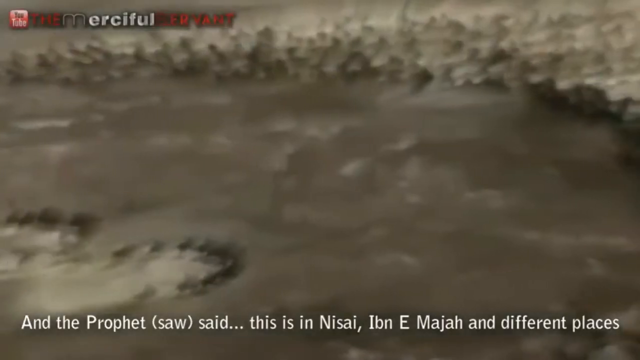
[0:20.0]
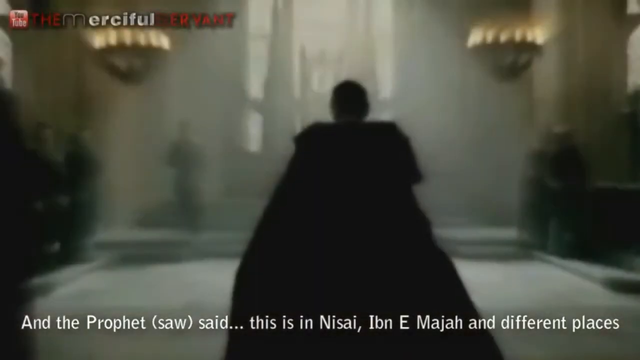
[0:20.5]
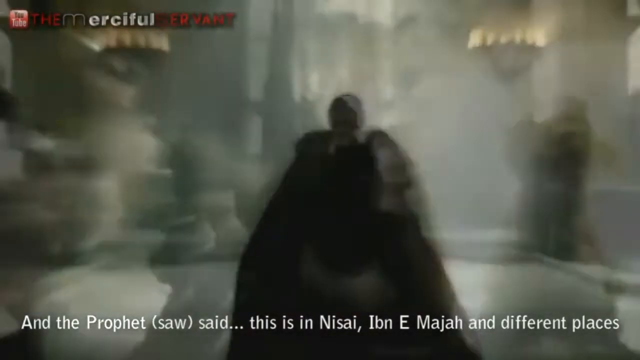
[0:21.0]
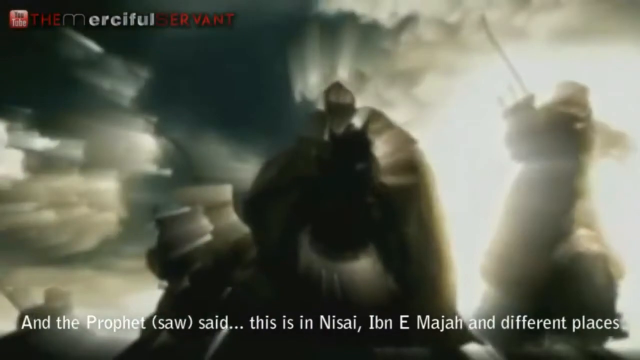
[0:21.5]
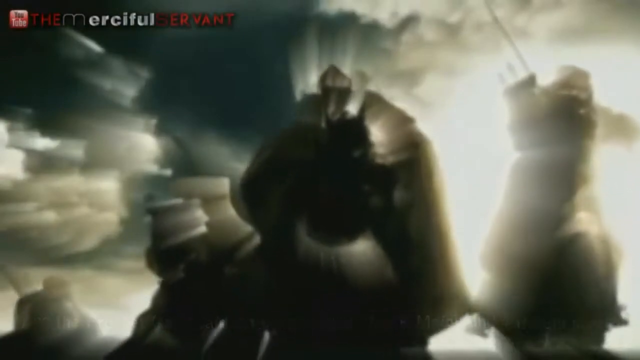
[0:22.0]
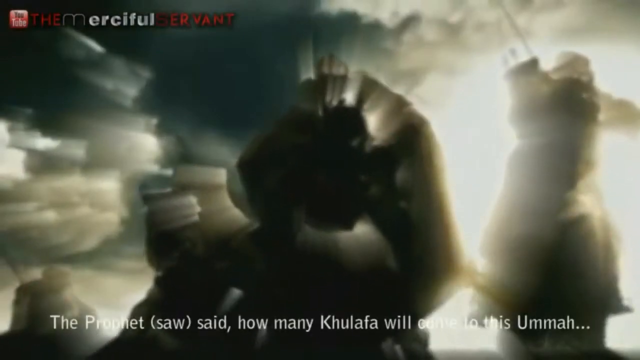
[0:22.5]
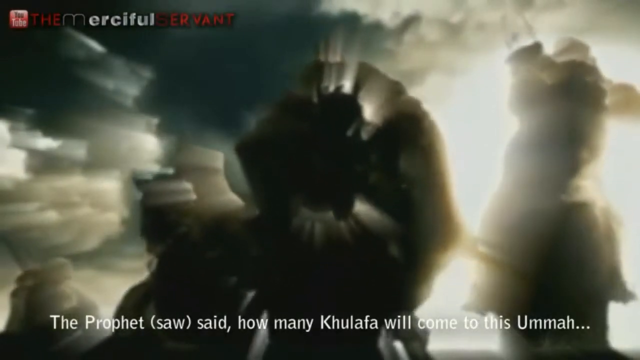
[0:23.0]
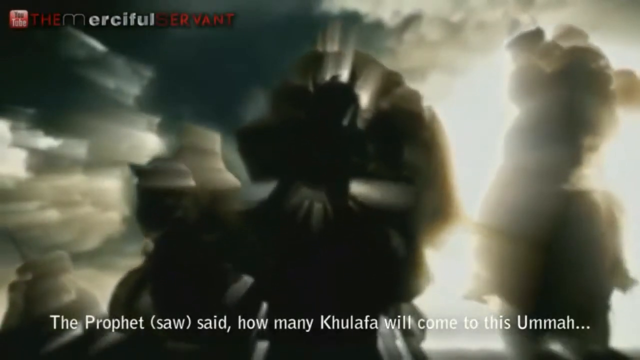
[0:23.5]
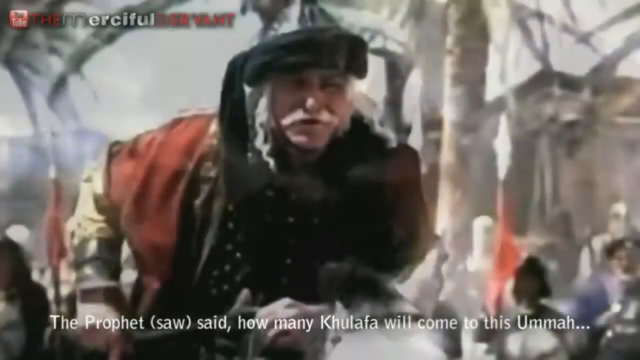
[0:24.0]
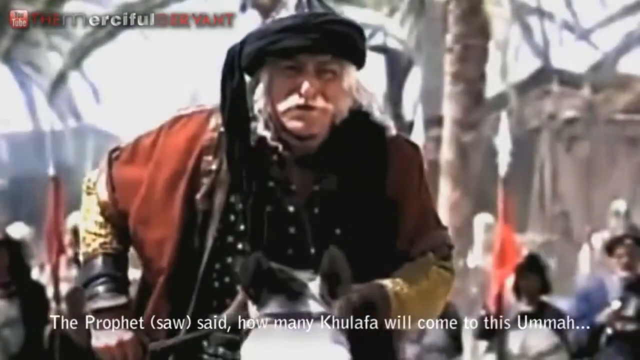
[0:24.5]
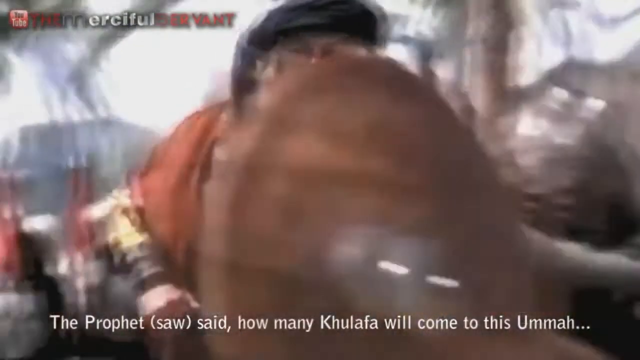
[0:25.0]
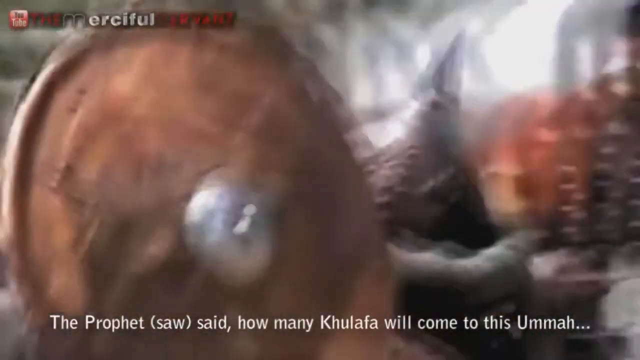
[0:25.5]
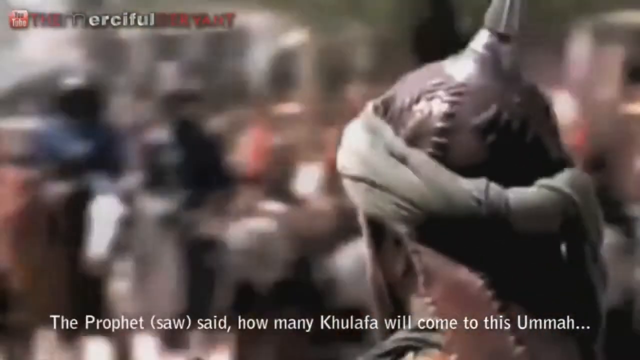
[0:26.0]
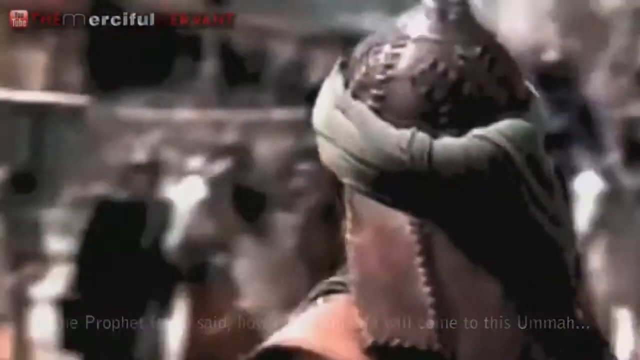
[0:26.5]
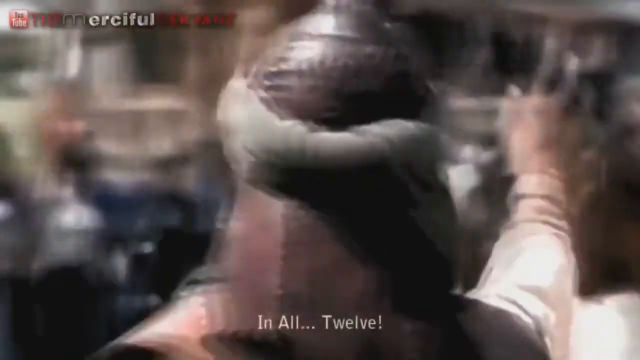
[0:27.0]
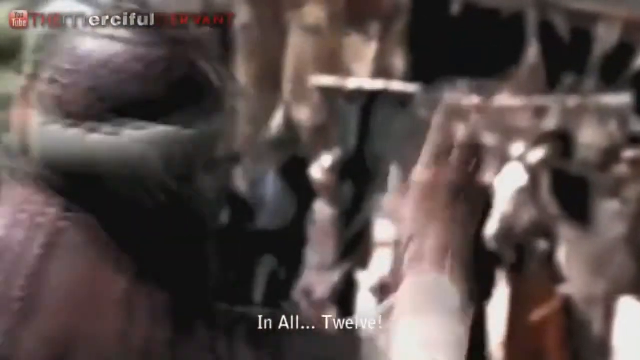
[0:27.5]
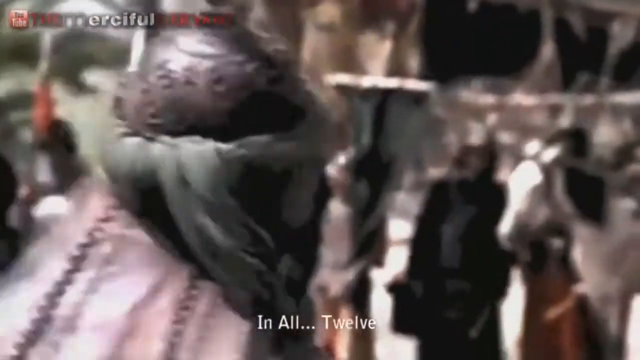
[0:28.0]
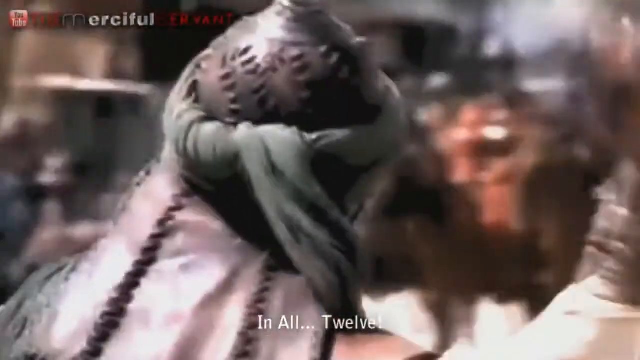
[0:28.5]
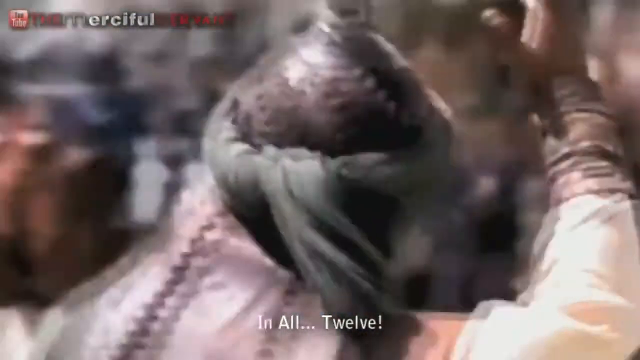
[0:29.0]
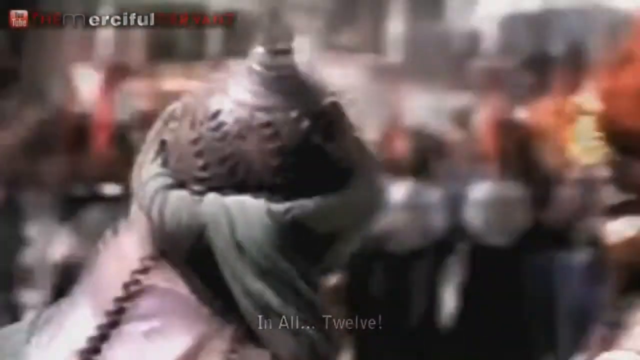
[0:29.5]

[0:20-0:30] The footage is quite blurry, but it looks like soldiers rising in the clouds. At the beginning, a male walks in a long robe that trails behind him, then goes to a type of castle with long, hanging, lighted chandeliers in front of him. An older man who looks to be Caucasian wears a turban on top of his head and some type of Arabic garment, with soldiers behind him. The soldiers look to be from ancient times, judging by their headgear, which has armor with cloth wrapped around it. The soldier who is the main commander speaks to the soldiers in the background. They are outside on a lot of land during daylight hours.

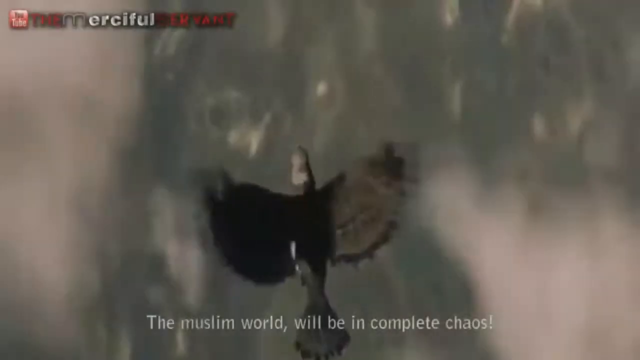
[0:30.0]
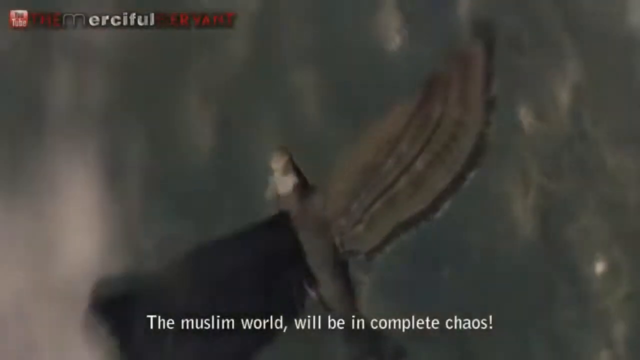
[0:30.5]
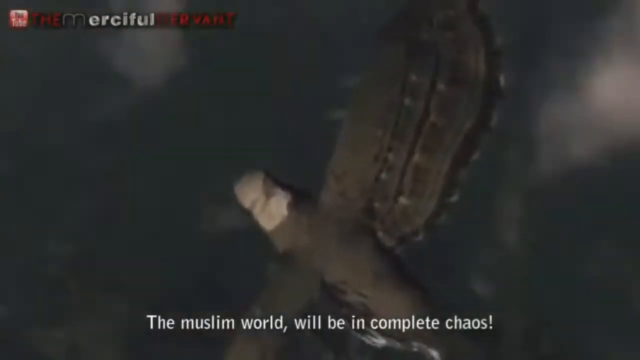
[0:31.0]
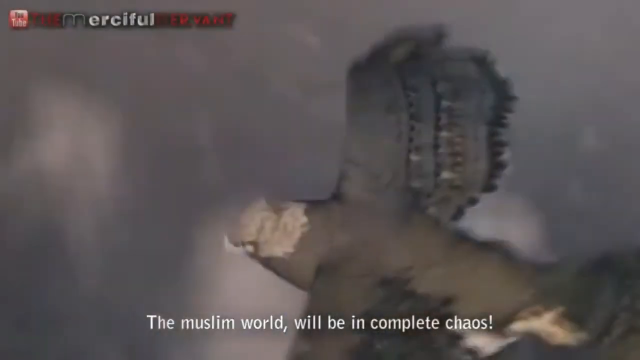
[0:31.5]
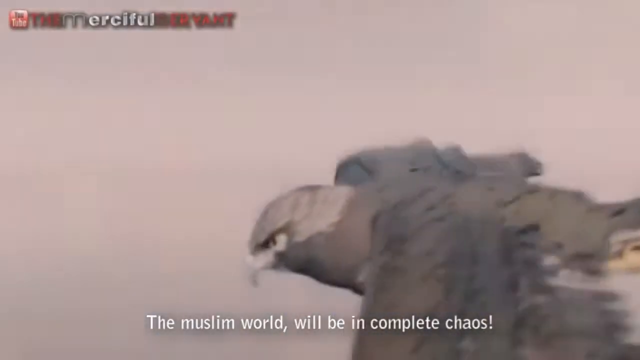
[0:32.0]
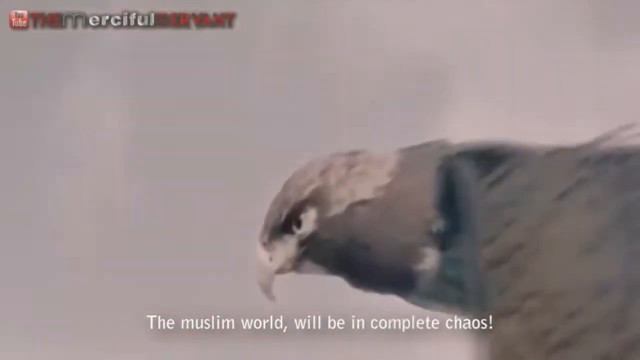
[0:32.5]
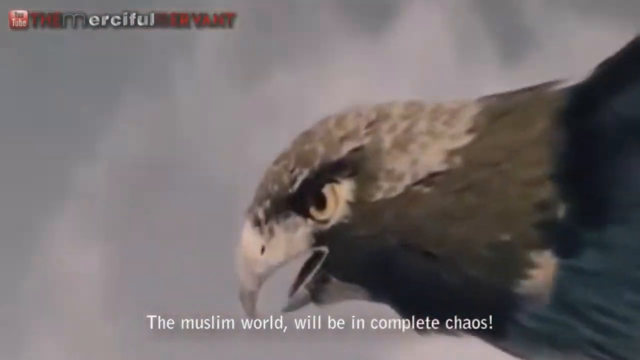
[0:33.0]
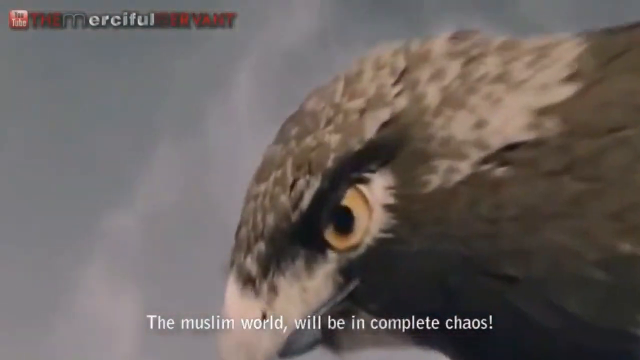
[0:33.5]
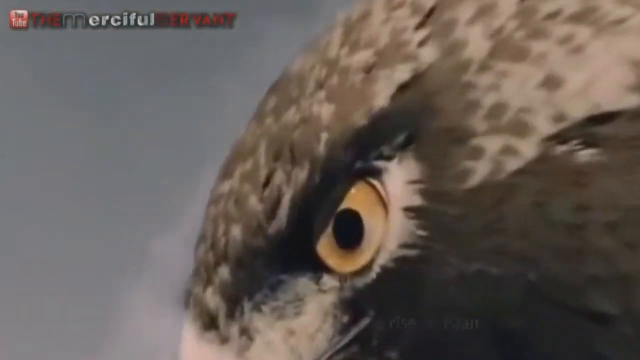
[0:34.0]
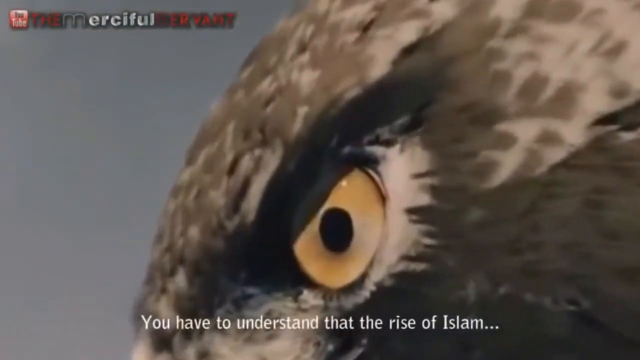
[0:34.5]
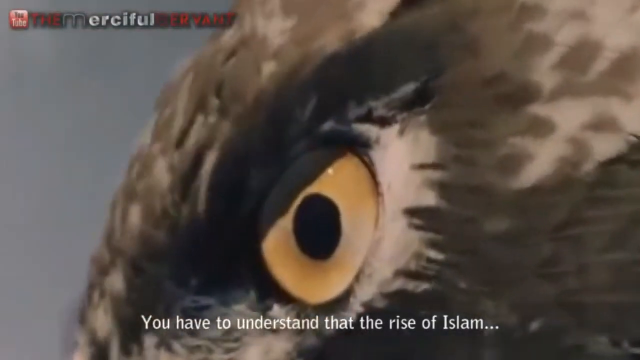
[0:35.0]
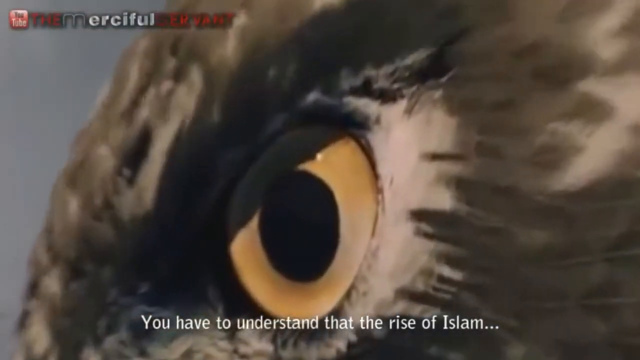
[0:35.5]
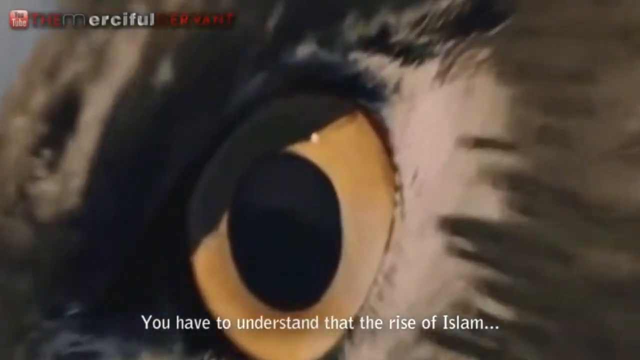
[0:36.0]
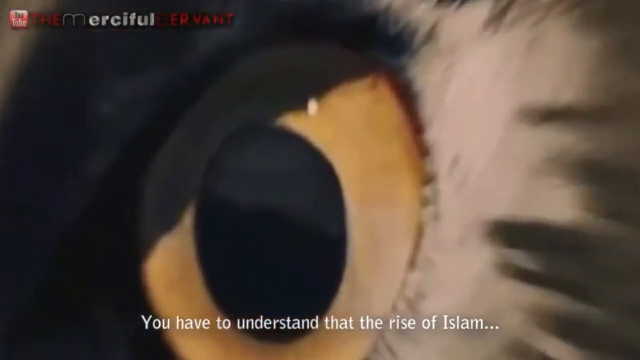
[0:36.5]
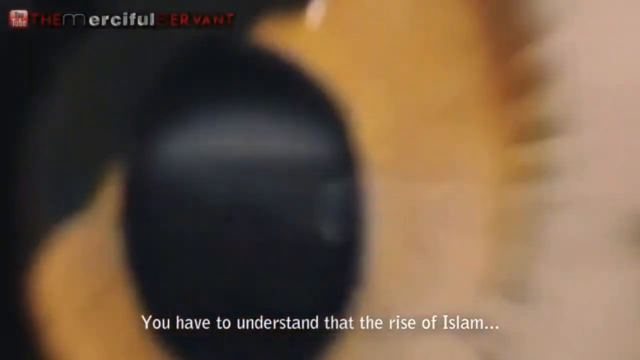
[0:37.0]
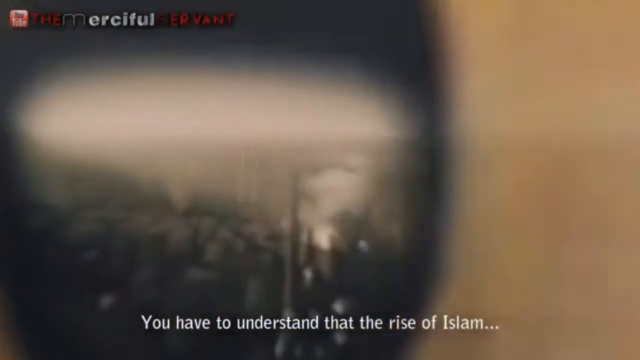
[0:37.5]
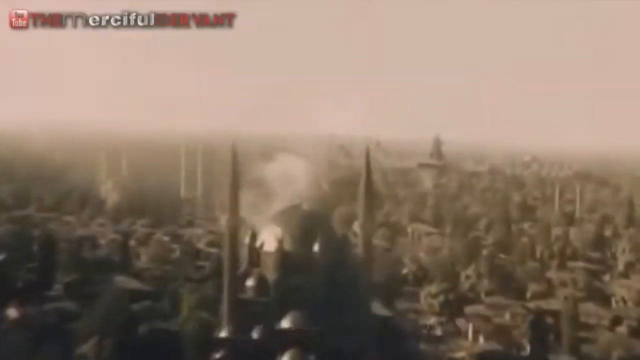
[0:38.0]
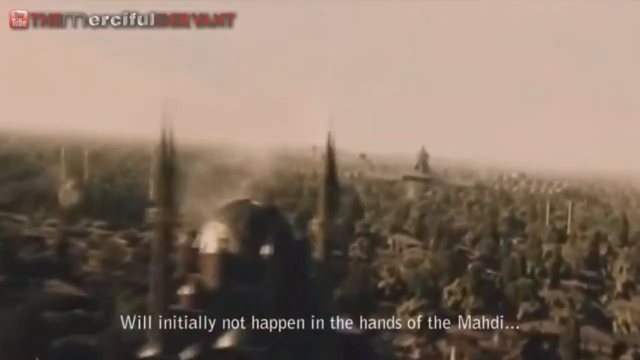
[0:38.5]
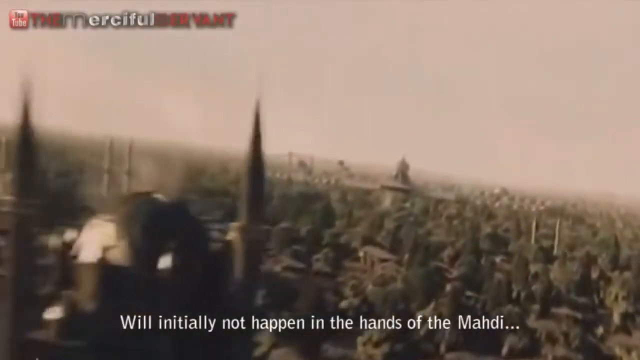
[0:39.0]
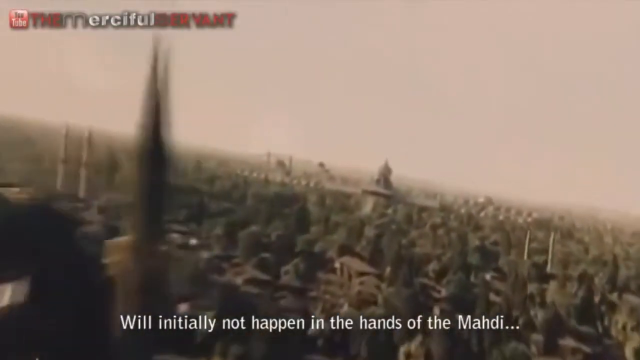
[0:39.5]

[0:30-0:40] A large eagle soars in the air while text at the bottom of the screen says "the Muslim world will be in complete chaos." The eagle is a very large bird with big, bright eyes and brown and white feathers. The camera shows the eagle's eye and zooms into it, and the image transforms to show land heavily populated with houses and castles. The eagle flies in the daytime, very high up in the clouds. Text at the bottom of the screen says "you have to understand that the rise of Islam will initially not happen in the hands of the Mahdi." In the top left of the screen are the word "Merciful" and an icon.